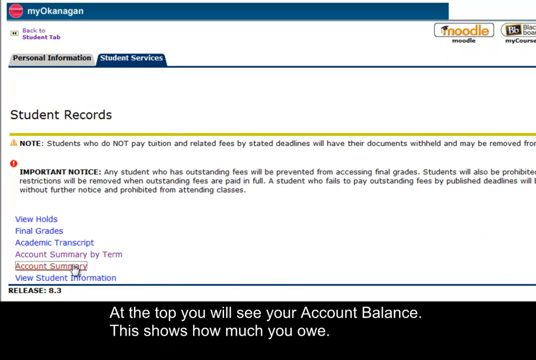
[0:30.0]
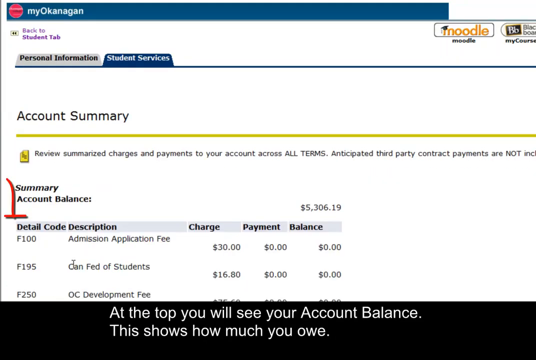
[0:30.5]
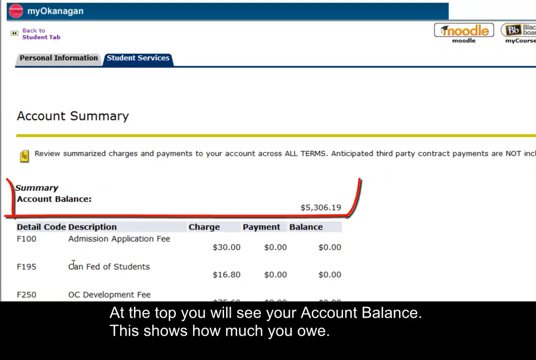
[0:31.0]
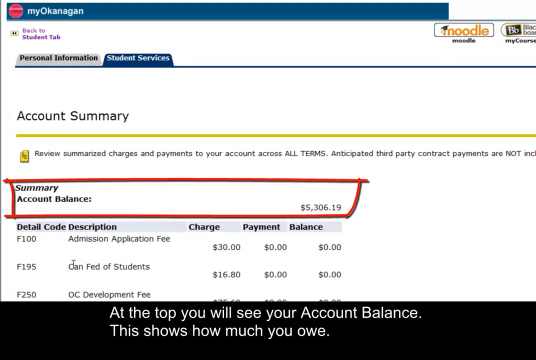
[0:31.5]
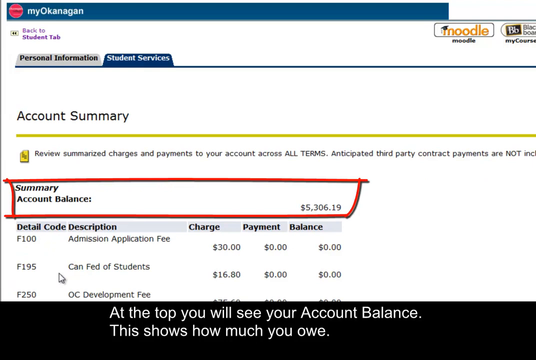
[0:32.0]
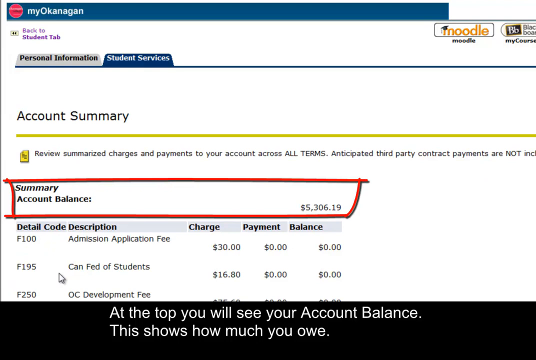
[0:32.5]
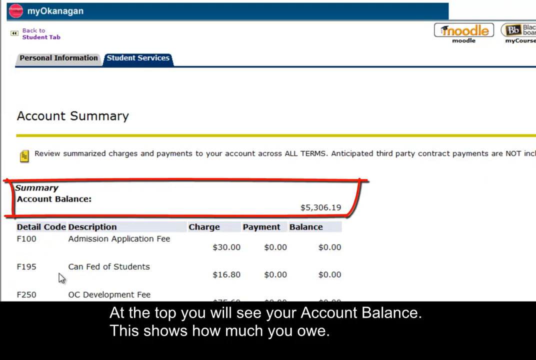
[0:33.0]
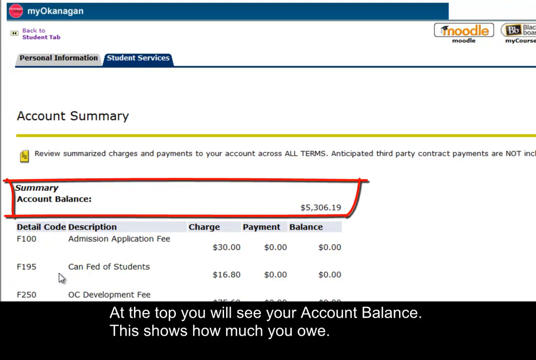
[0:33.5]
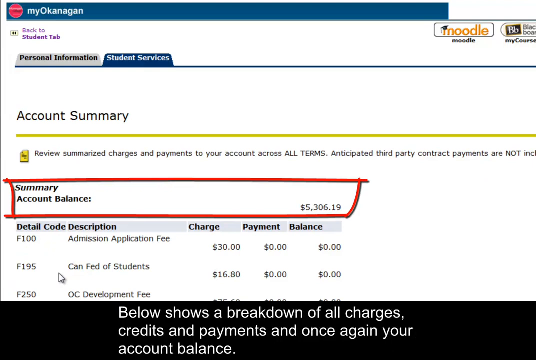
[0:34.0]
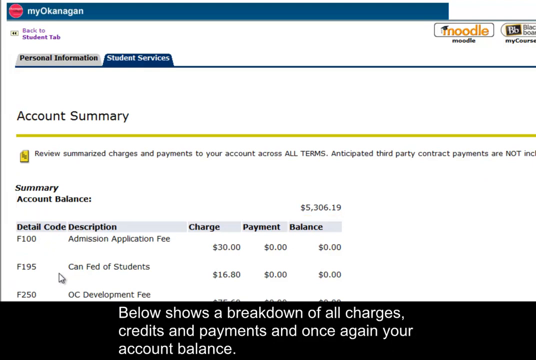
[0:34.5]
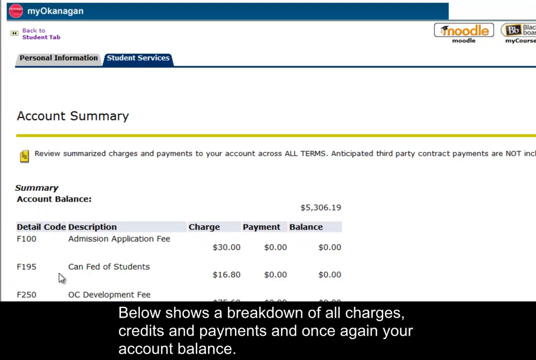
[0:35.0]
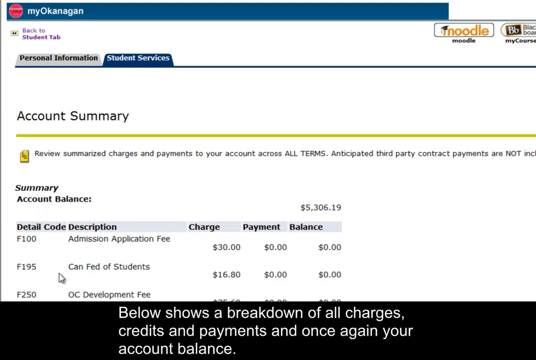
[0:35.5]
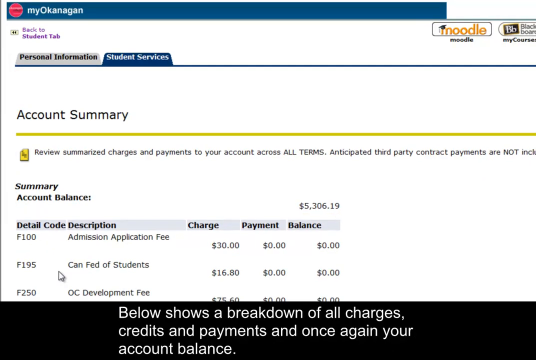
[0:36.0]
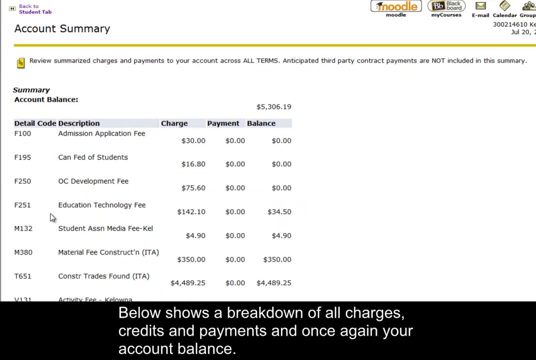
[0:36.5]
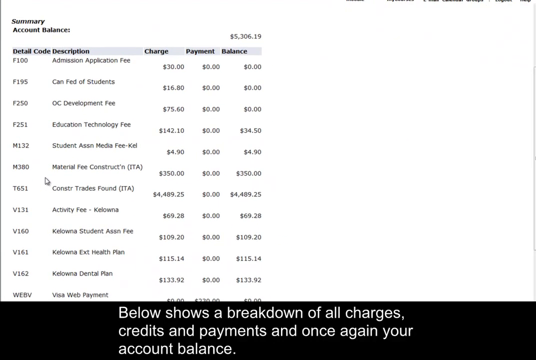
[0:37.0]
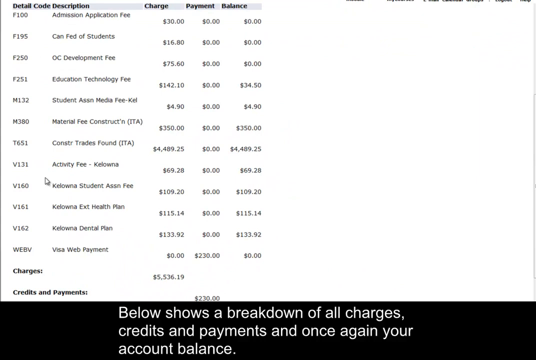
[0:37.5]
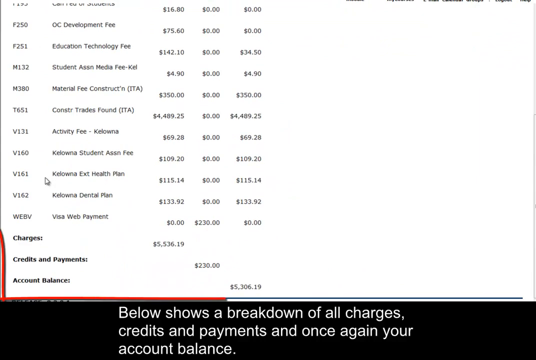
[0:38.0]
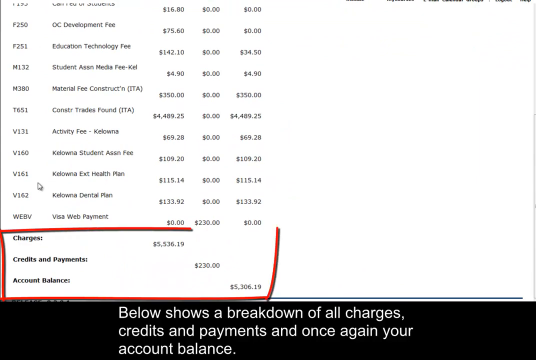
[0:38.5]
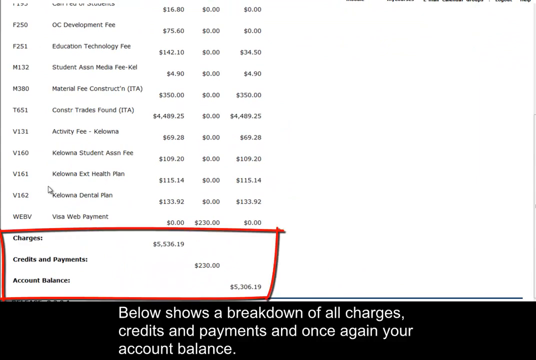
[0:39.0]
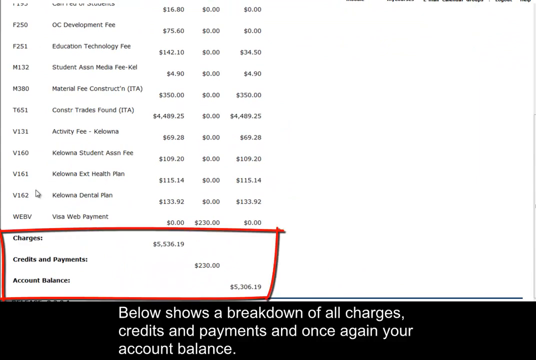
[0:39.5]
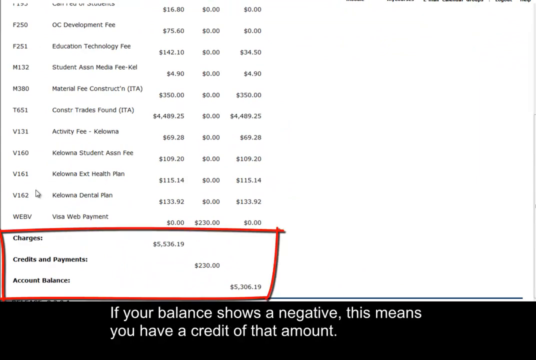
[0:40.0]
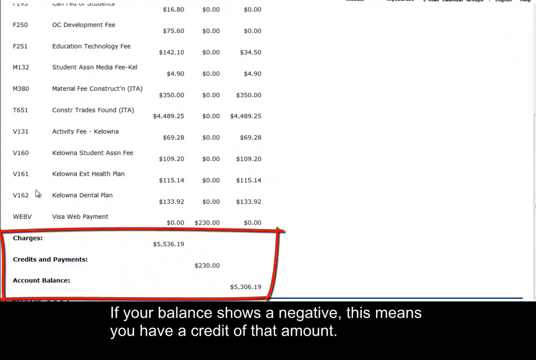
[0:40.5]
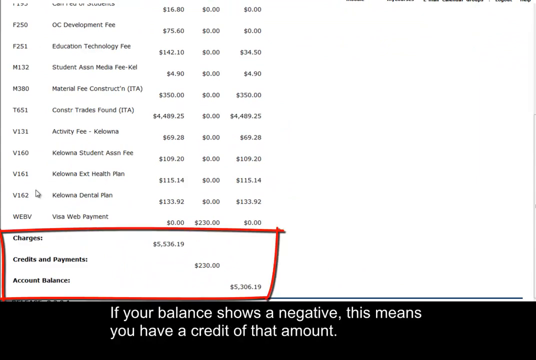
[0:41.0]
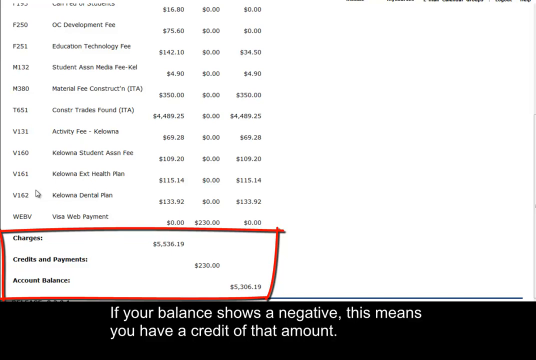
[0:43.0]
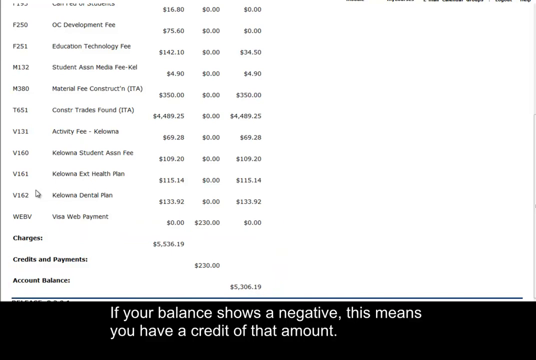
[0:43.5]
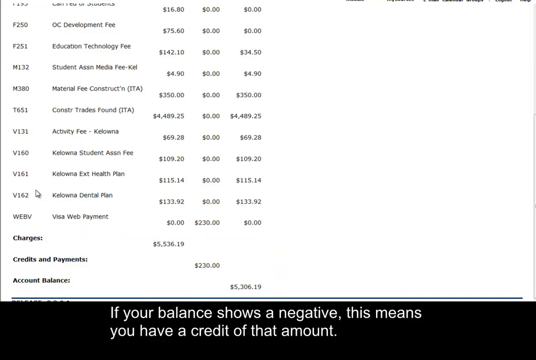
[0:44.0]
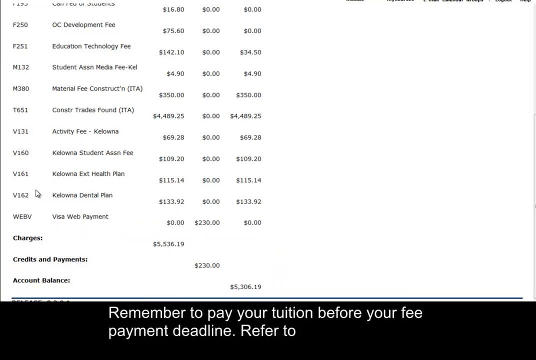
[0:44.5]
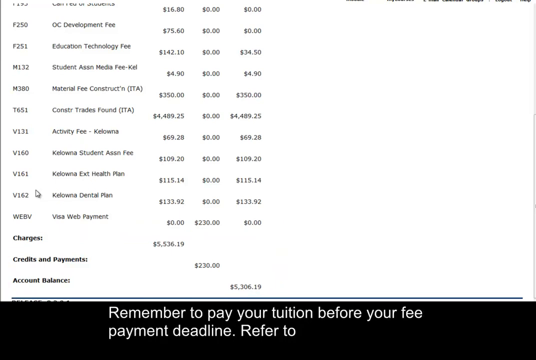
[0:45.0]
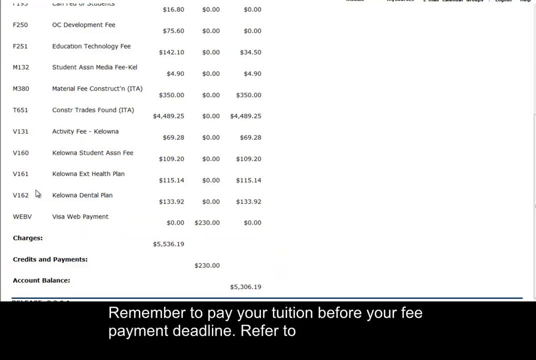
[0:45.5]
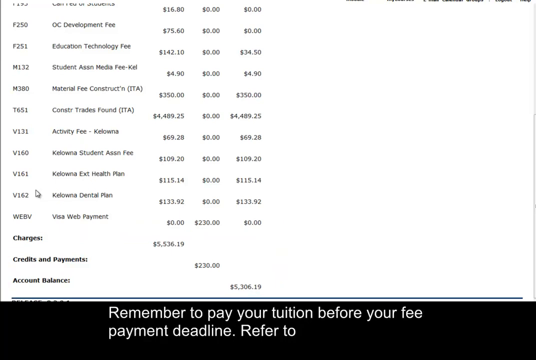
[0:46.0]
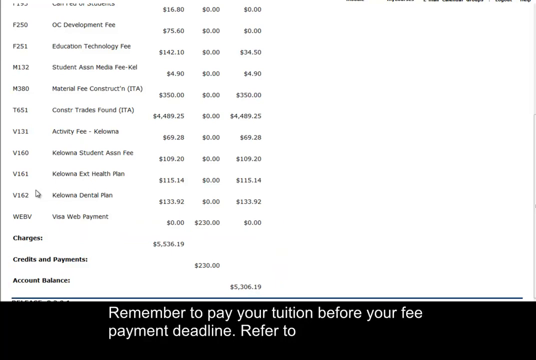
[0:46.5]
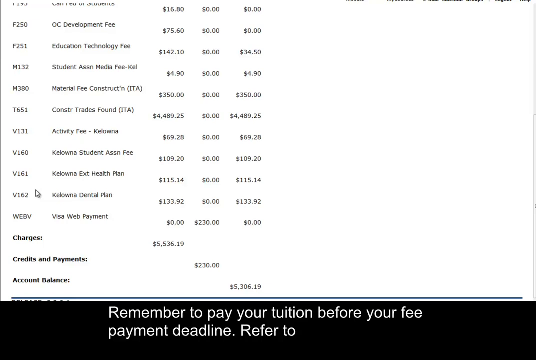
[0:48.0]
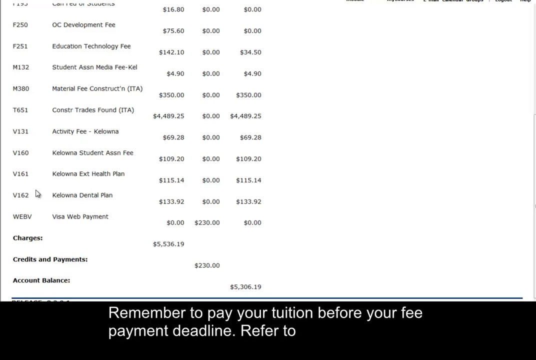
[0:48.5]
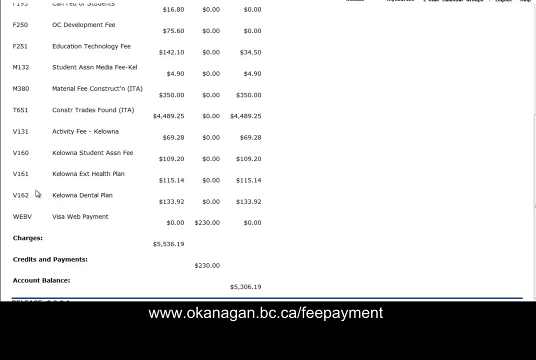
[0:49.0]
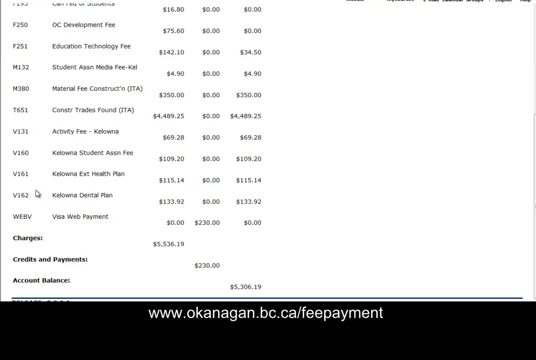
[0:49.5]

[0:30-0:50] A page with the caption "Account Summary" shows personal information on the My Okanagan website. There seem to be two tabs, personal information and student services; the user seems to have clicked on personal information, which opened the Account Summary page. The user seems to highlight the part that says "Summary Account Balance," with an amount on the right, then scrolls down to the part that says "Charges, Credits, and Payments Account Balance." Instructions at the bottom seem to guide the user through using the college website, and this caption keeps changing as the user clicks on each different page.